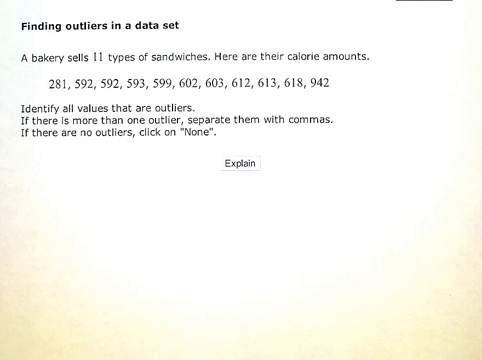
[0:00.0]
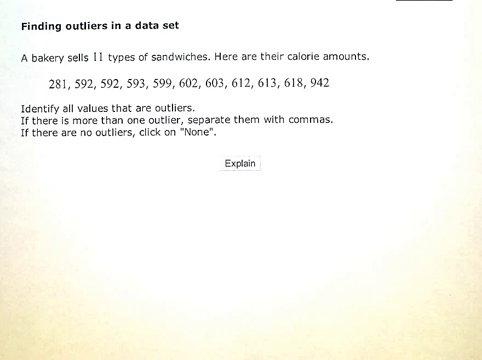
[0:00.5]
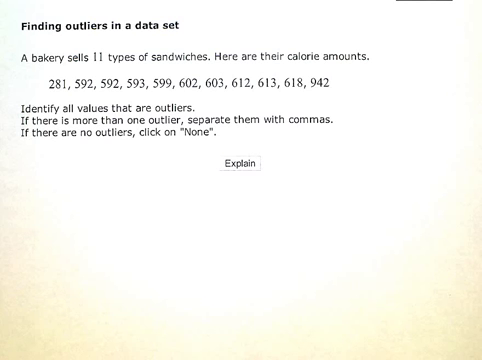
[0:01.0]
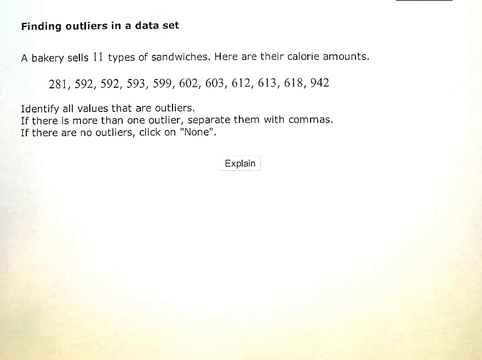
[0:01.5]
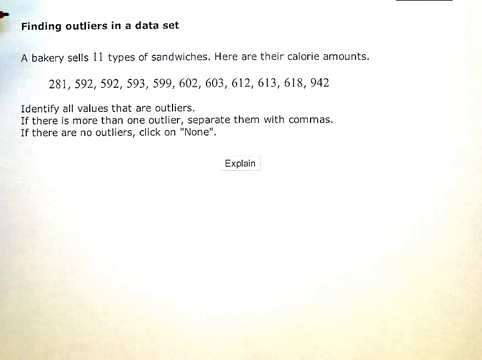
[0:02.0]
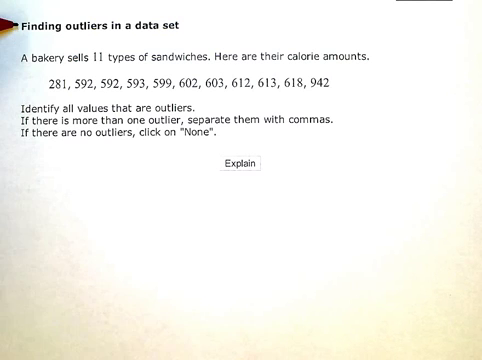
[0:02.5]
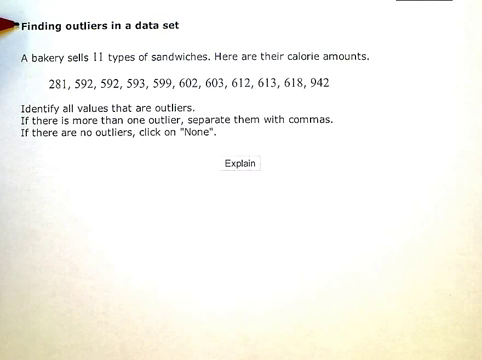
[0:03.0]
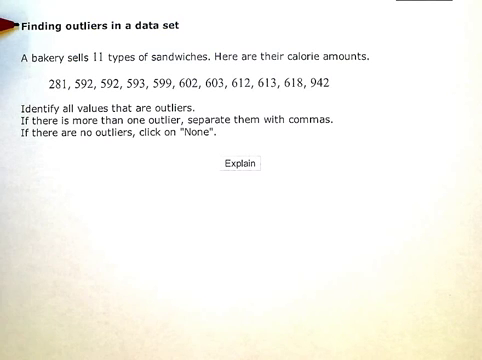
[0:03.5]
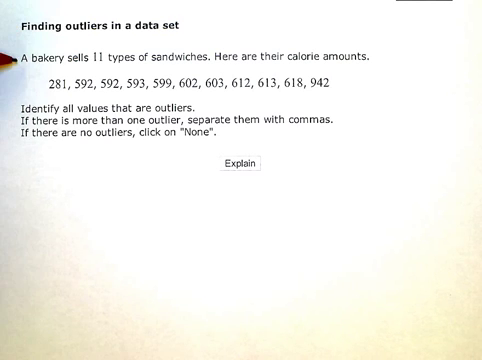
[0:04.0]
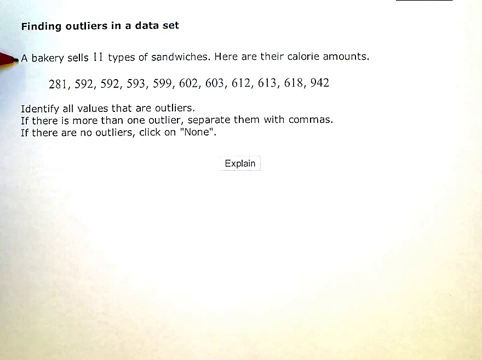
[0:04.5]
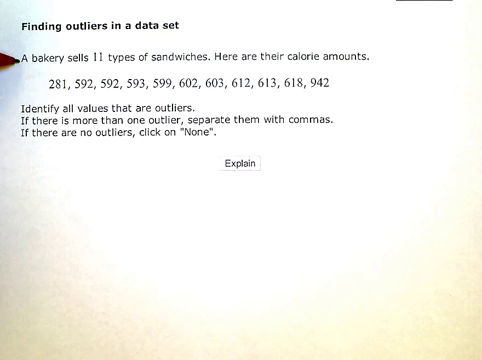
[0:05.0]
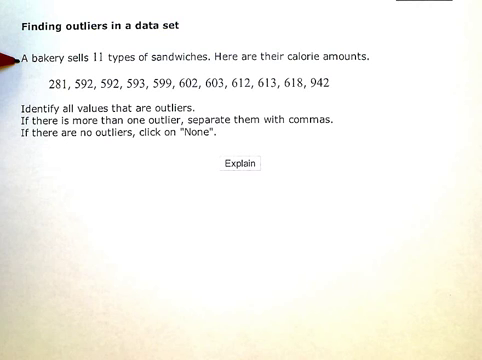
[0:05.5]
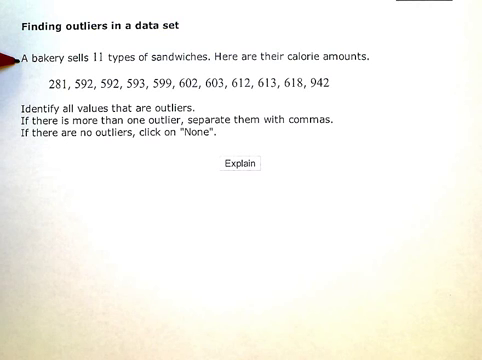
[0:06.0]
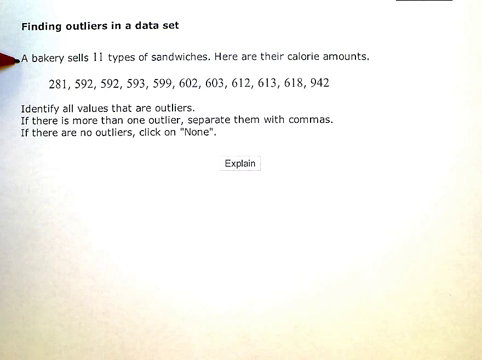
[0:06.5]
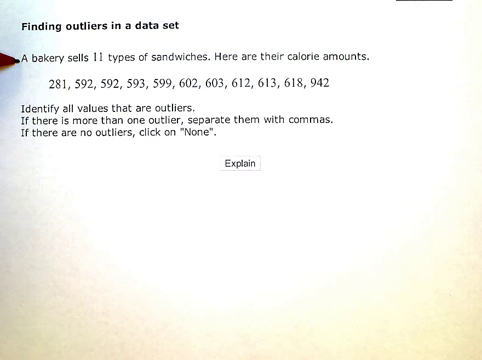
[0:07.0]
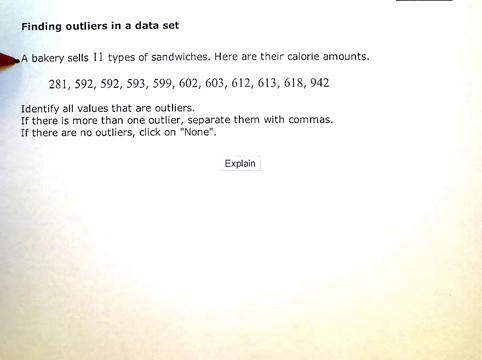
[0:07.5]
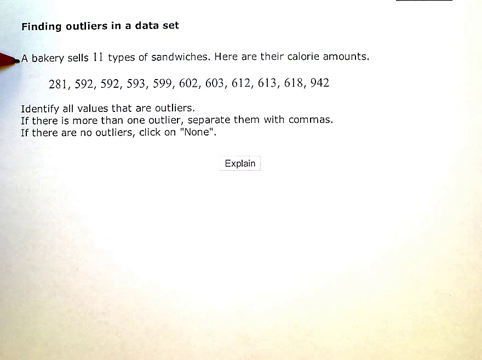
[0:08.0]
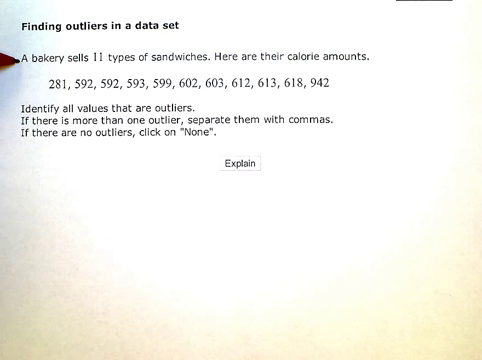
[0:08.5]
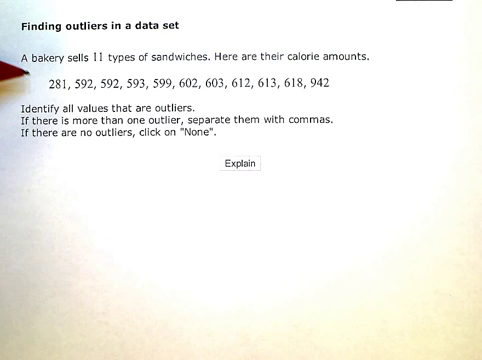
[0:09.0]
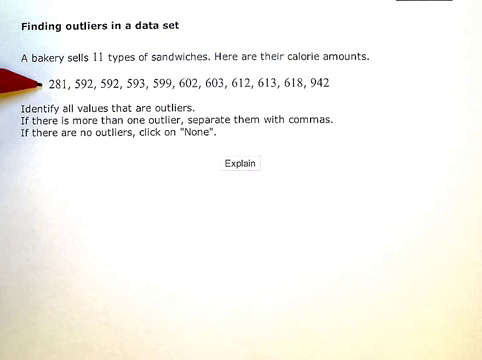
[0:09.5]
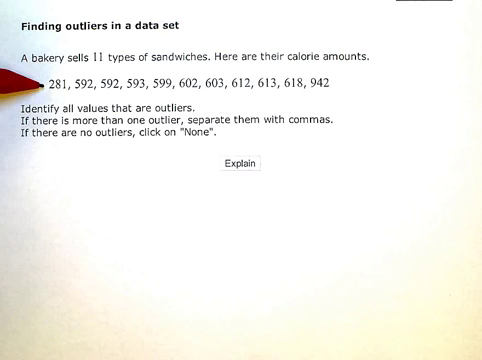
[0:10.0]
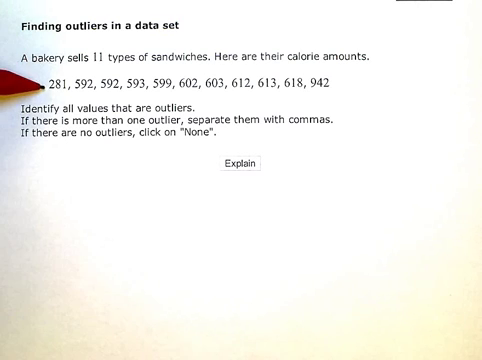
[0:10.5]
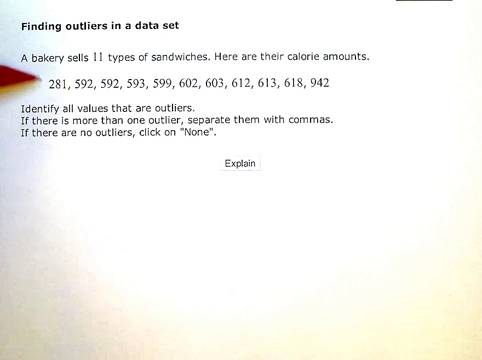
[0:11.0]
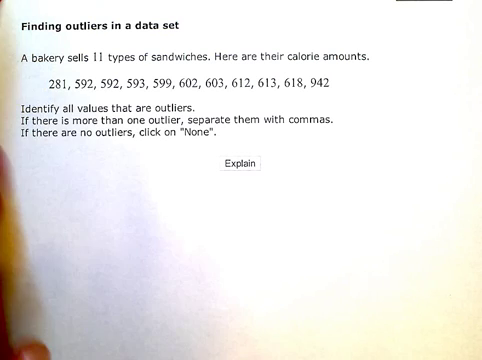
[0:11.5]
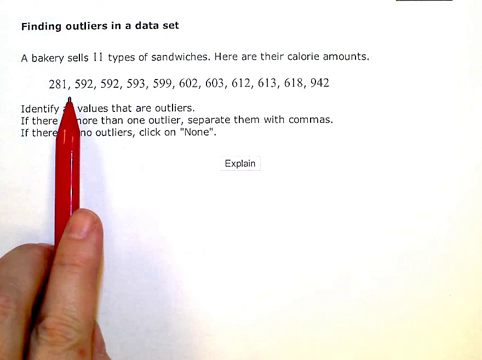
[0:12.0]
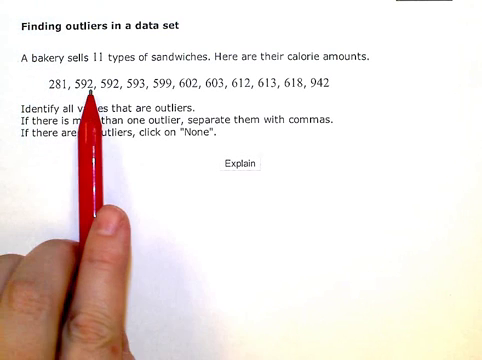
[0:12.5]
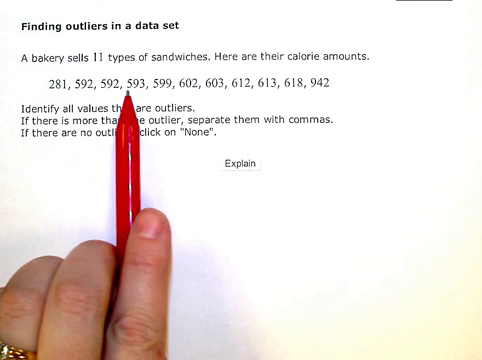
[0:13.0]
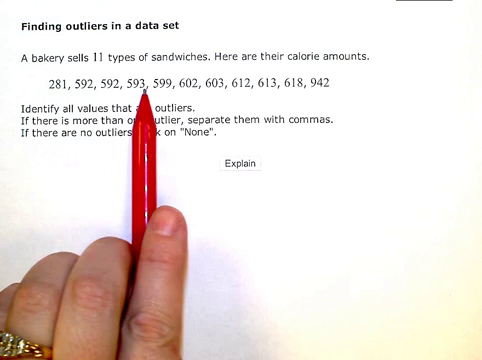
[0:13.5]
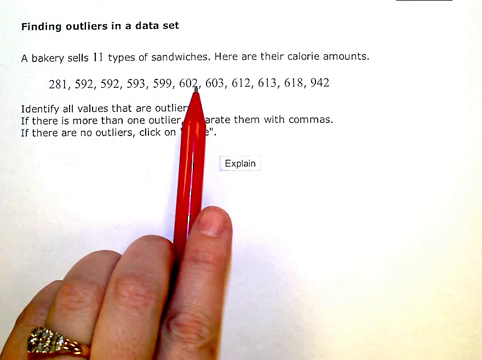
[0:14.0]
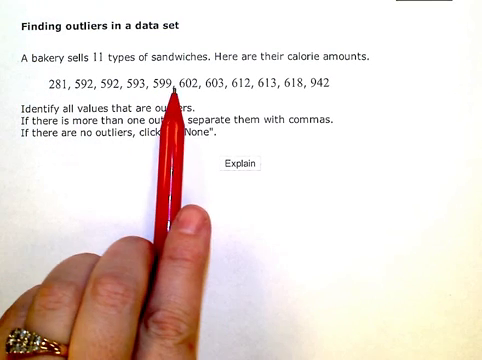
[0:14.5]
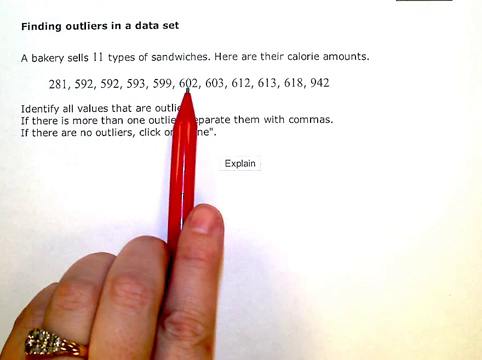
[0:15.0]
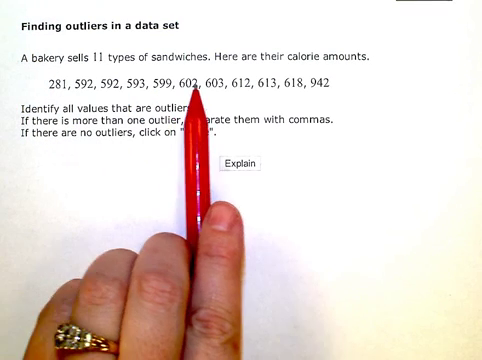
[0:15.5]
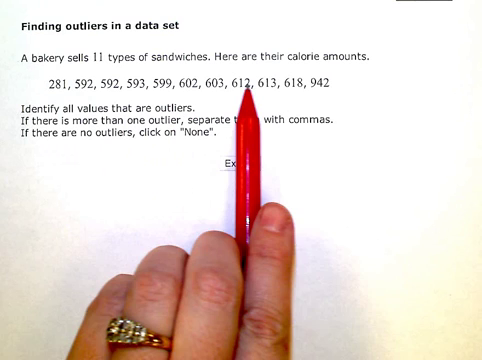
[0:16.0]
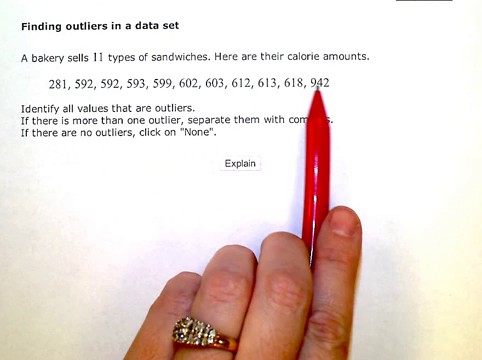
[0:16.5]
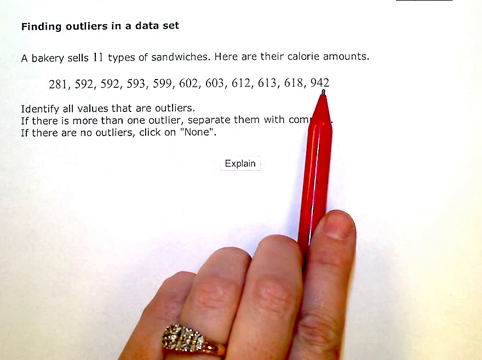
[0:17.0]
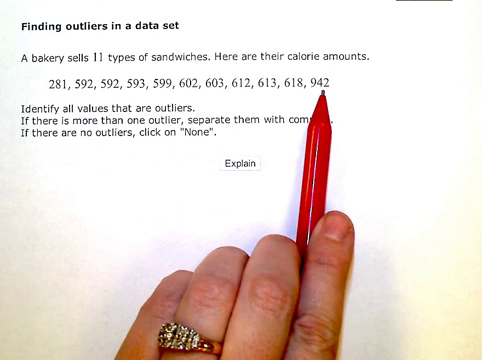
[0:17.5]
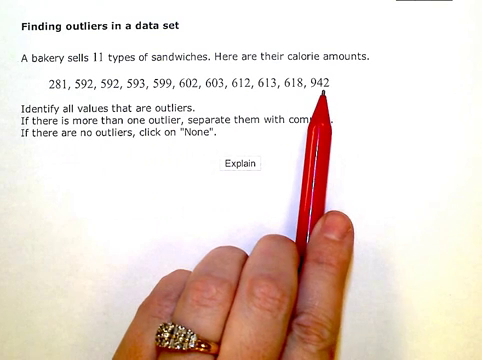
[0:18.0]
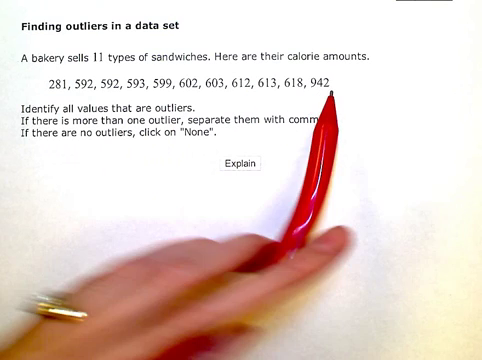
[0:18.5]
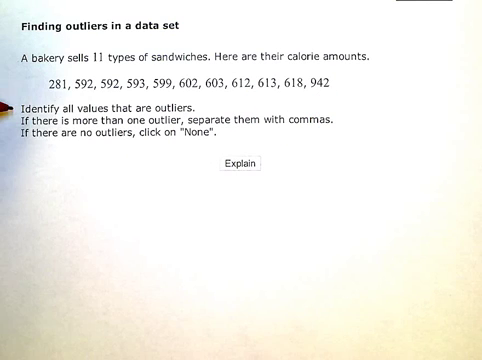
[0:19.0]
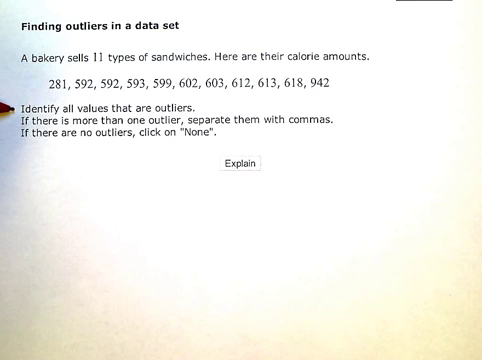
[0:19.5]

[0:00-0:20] A math question about finding outliers in a data set is shown. A pen nib appears from the top left and points to the question, then moves to point to the numbers in it. A hand holding the pen comes in from the bottom left of the screen, the pen held between the first and index finger. The hand moves across the page toward the right so that each number is shown in turn. Once all the numbers have been shown, the pen jumps to the left and points to where it says "identify all values which are outliers." In the final second more text is on the screen, and once the pen has disappeared it reads "if there is more than one outlier, separate them with commas if there are no outliers, click on none." There is a button in the center that says "explain."